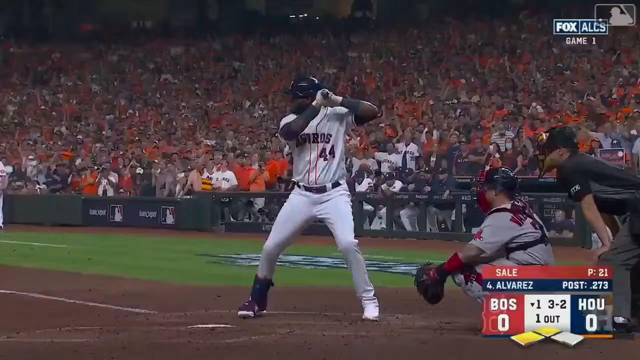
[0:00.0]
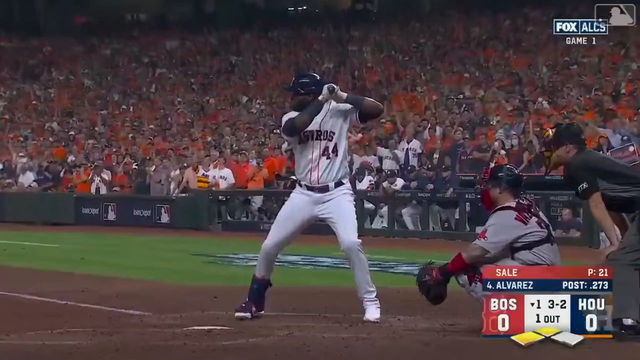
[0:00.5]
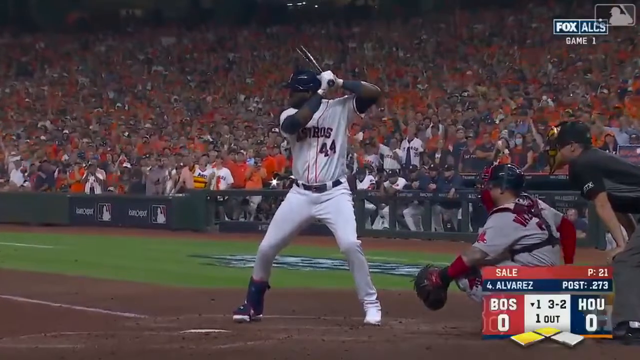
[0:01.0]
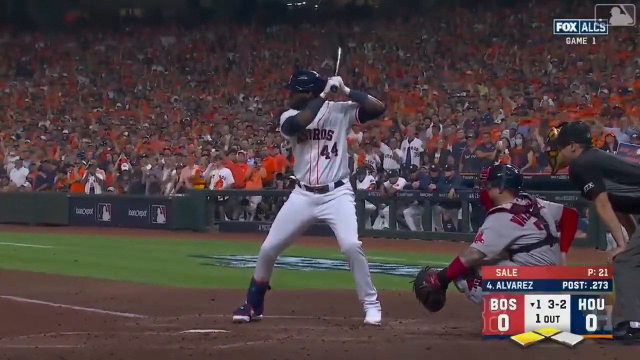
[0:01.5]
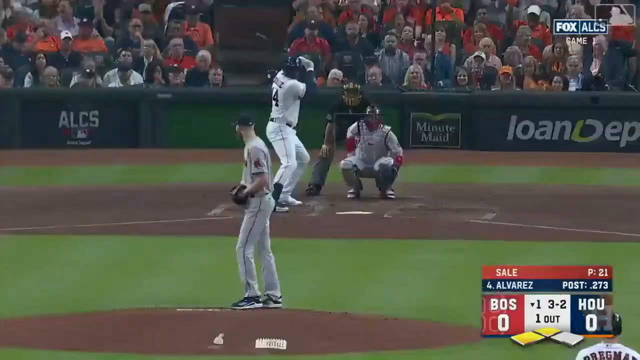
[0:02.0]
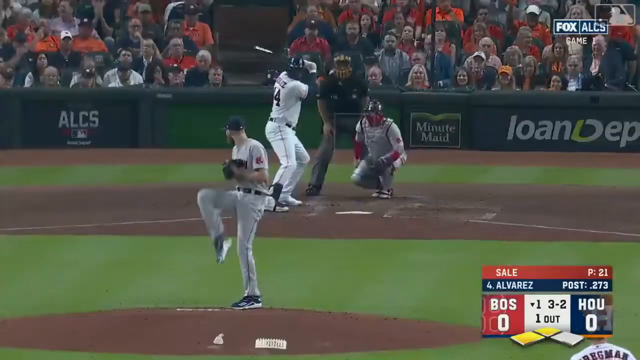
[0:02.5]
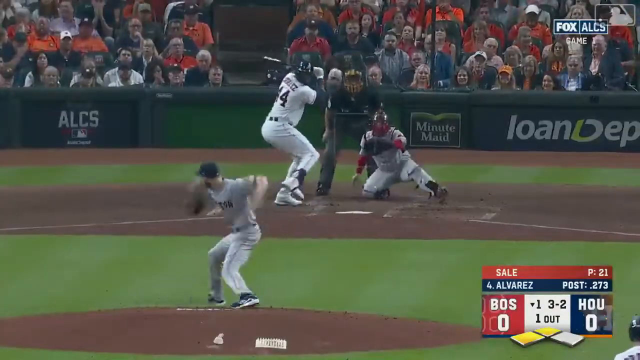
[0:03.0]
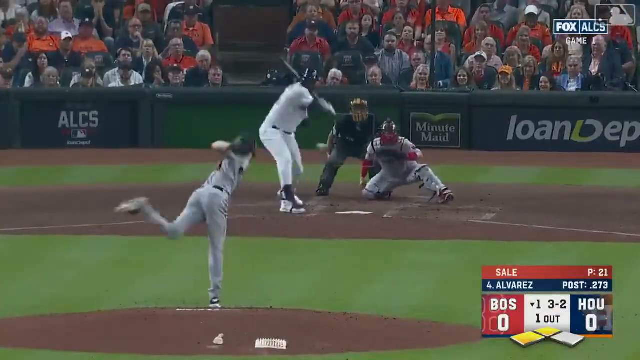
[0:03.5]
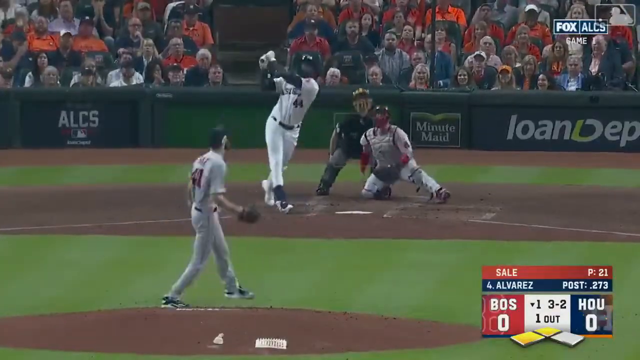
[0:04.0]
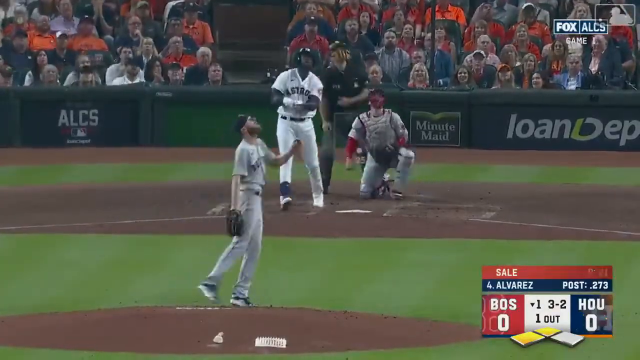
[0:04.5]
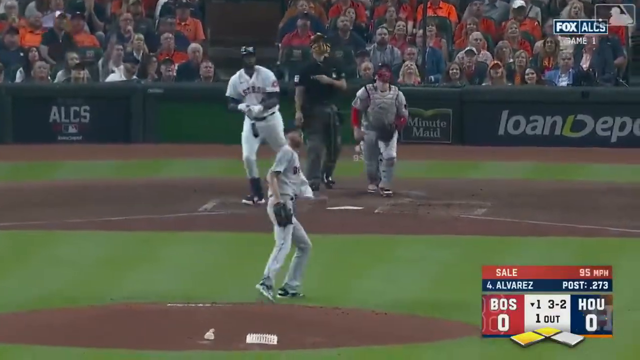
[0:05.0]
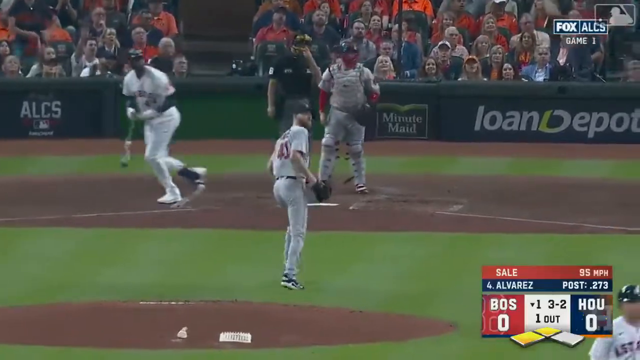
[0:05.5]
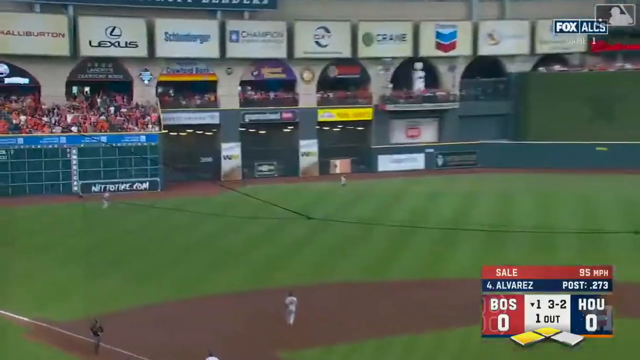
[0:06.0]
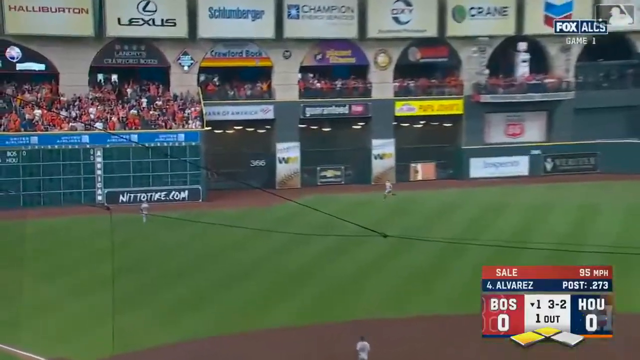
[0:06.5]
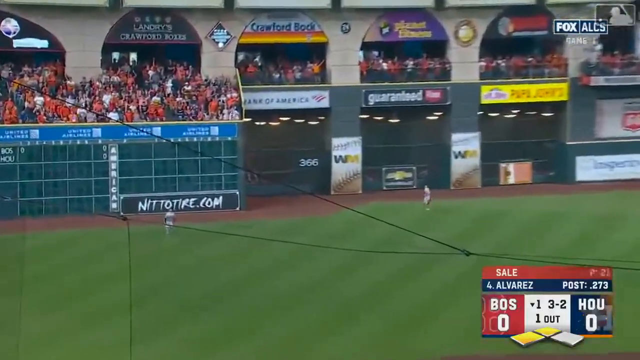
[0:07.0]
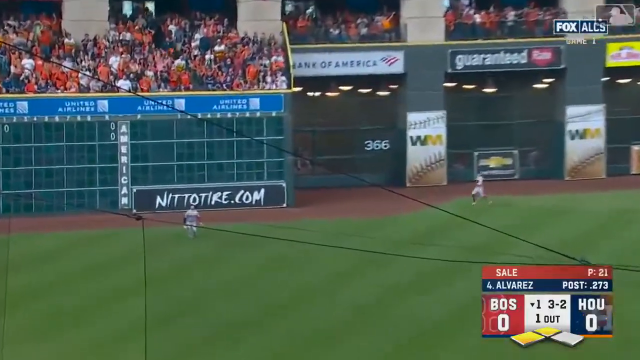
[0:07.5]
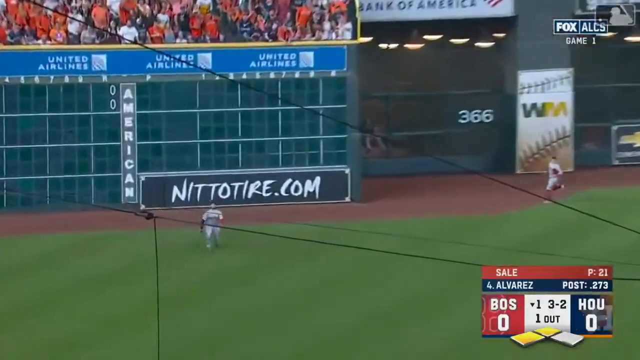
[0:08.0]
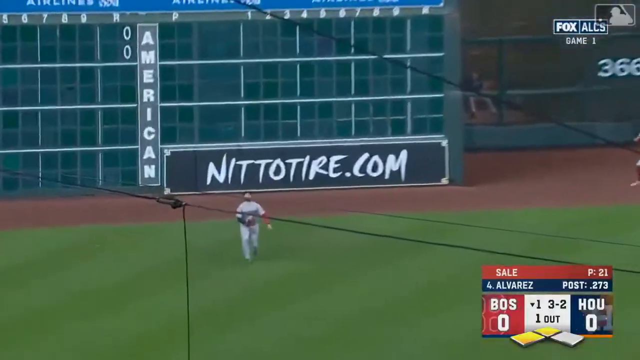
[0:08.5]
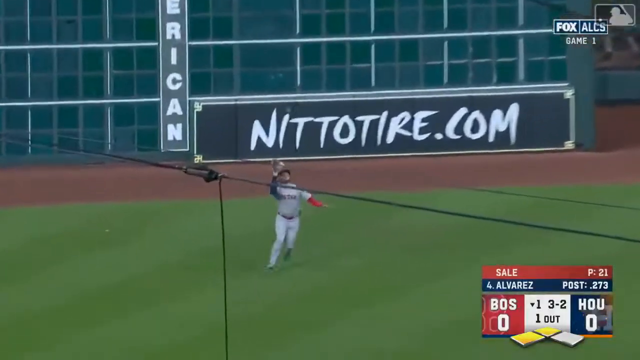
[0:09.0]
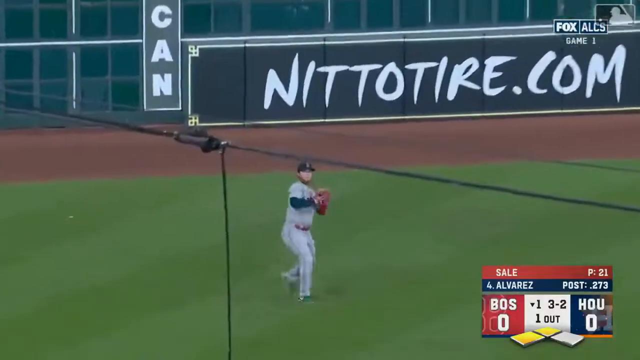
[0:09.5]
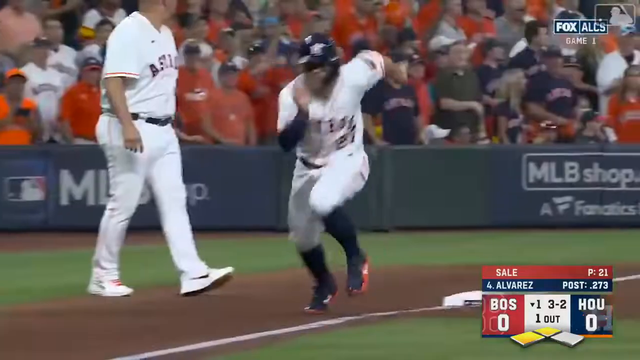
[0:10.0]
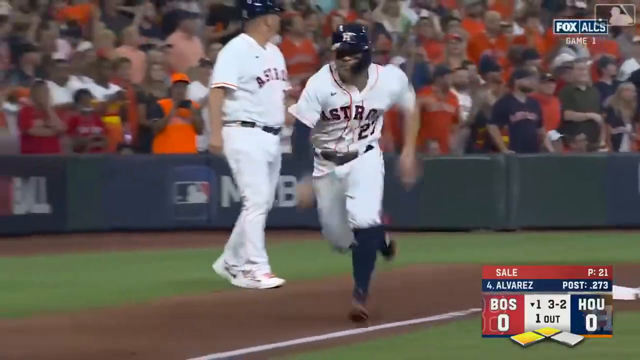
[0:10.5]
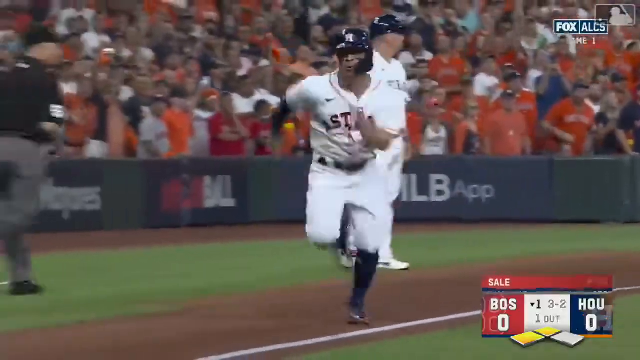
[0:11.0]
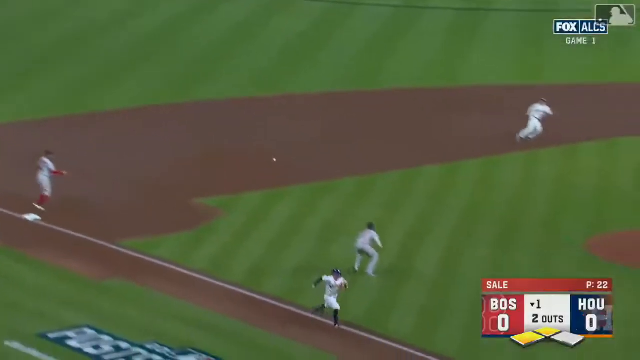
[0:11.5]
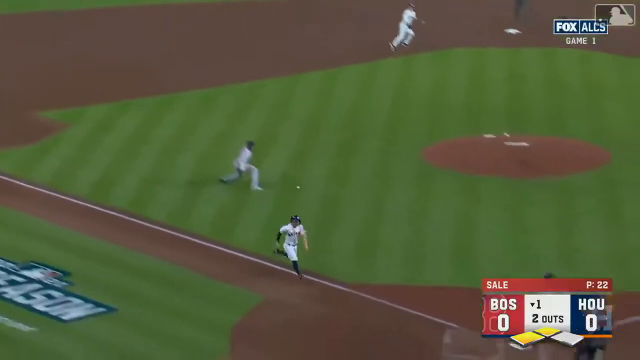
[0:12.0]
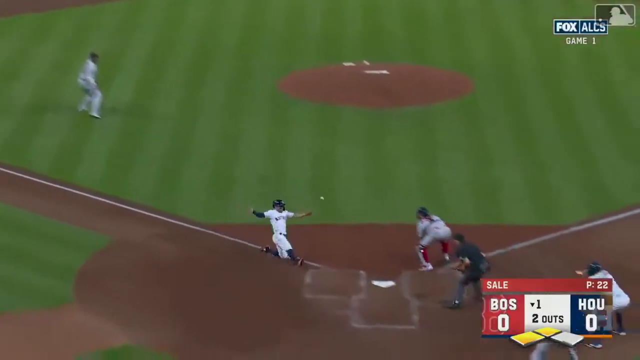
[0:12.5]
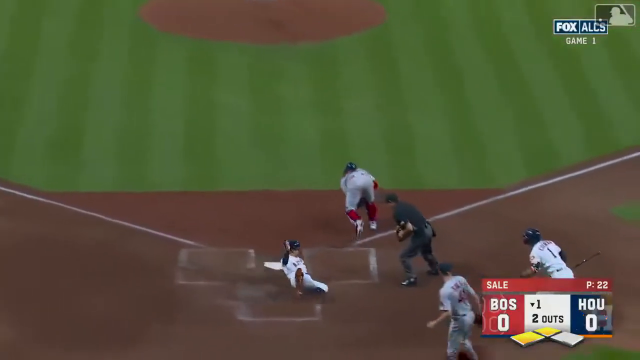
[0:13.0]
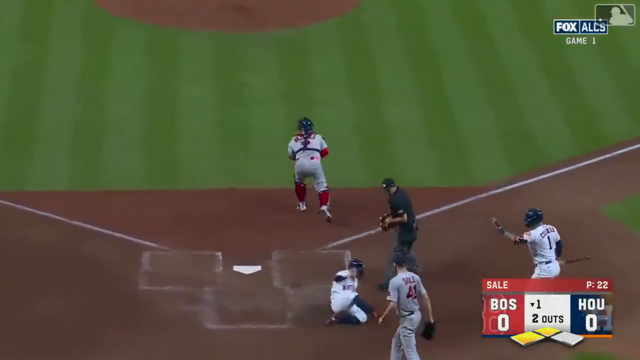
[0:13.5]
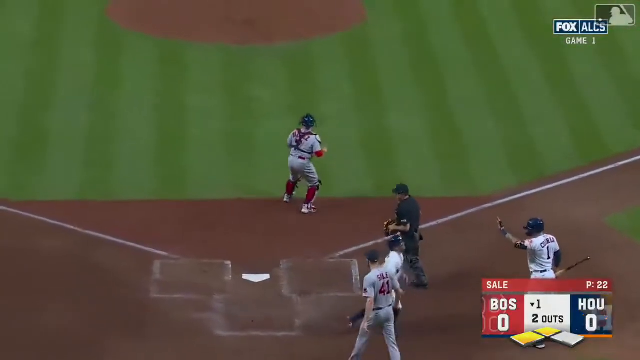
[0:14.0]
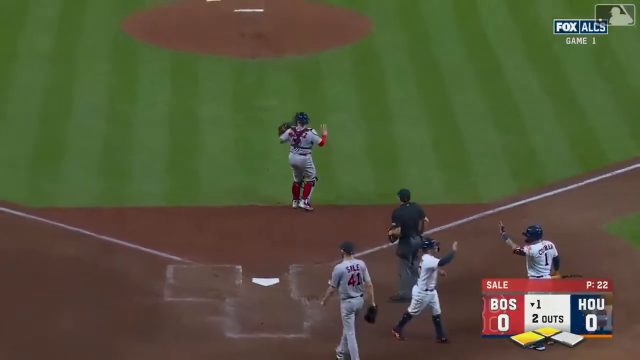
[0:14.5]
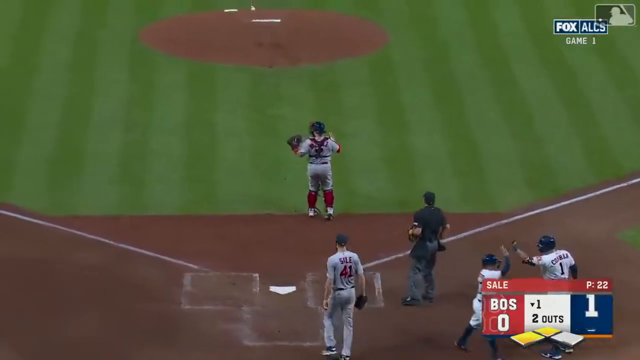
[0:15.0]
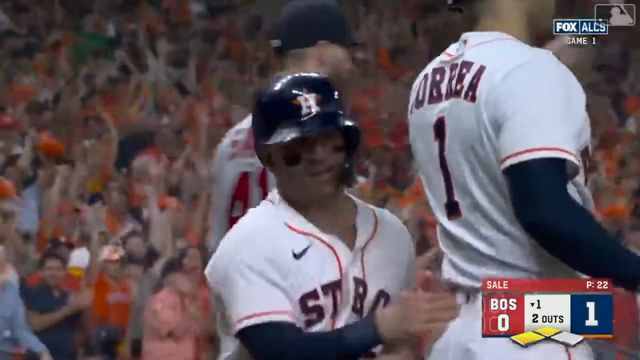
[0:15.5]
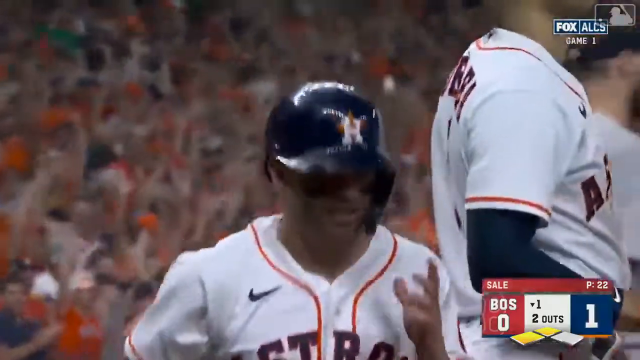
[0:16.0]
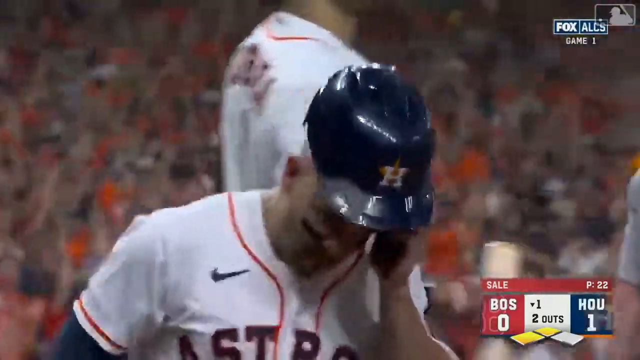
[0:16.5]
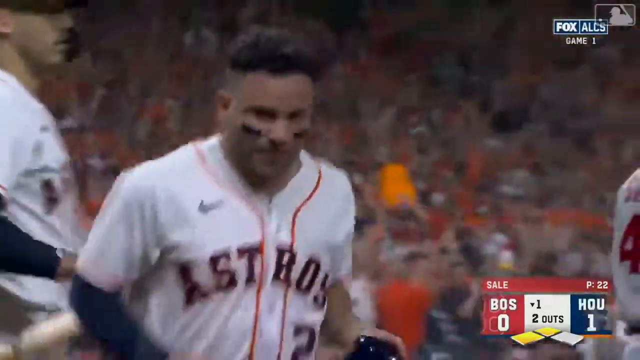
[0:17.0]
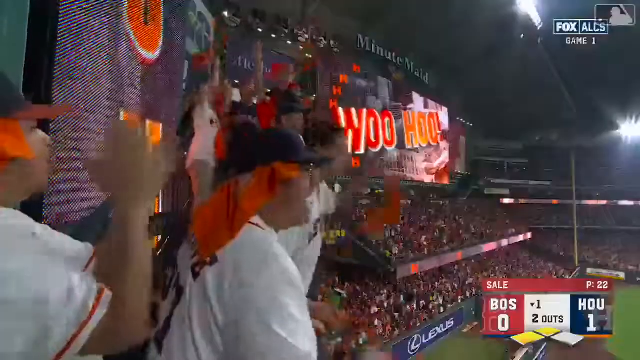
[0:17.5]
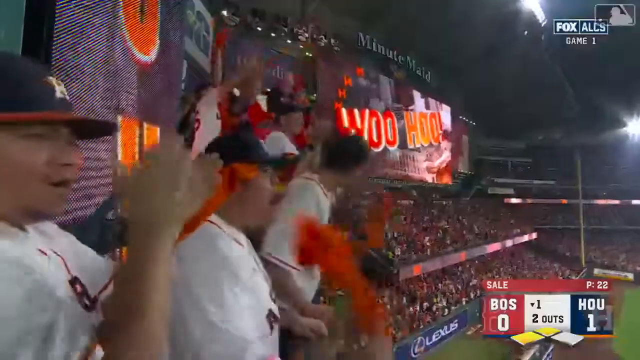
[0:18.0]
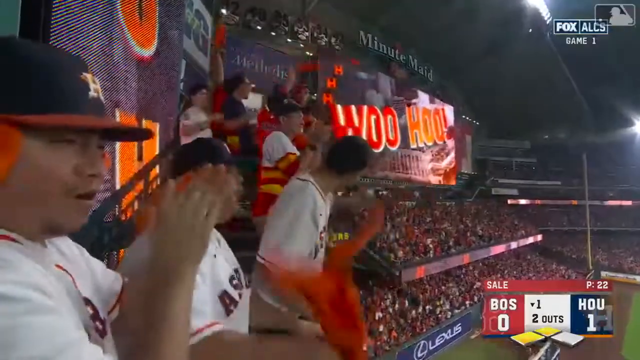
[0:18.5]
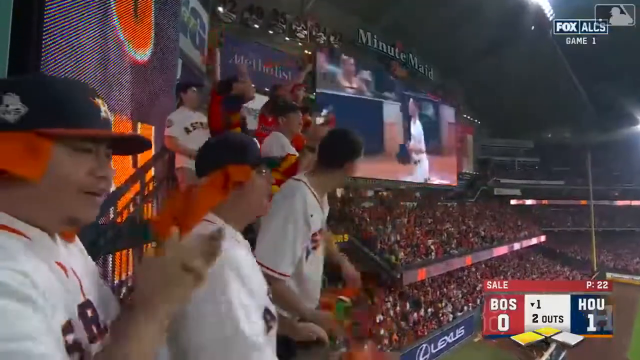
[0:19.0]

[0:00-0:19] A ground-level view looks straight at a batter who faces the camera with his chest but looks to the left. Behind him, a sea of people in the crowd comes down about two-thirds of the frame, then a little green wall separates them from the field. Coming down the left side about a third of the way is the dugout fence, and then the grass. On the right side is the umpire, wearing a black shirt, gray pants and a face mask. In front of him the catcher is squatted down, wearing a gray shirt with red lettering, a black hat and a glove on his left hand. The batter wears a white Astros uniform with the number 44, a black helmet, black armbands and a black shin guard on his lead foot on the left side. He is lined up in the batter's box holding the bat. In the bottom left corner is game information showing the game at 0-0 with one out. The batter starts to wiggle the bat as the umpire wipes his back. The view cuts to behind the pitcher. The catcher sticks his leg out to the side opposite the batter, extending it straight out as he squats down more. The left-handed pitcher winds up and delivers the pitch, and the batter hits it up. The pitcher starts running toward the catcher. The view cuts to the outfield, where the ball is close to the fence but the fielder catches it. The man on third takes off running for home, and the view cuts to a close-up of him. The throw misses the cutoff man and goes to the catcher. The runner, who is very short, slides home for the score and taps one of his teammates. The view then cuts to the crowd celebrating and a jumbotron showing the replay.